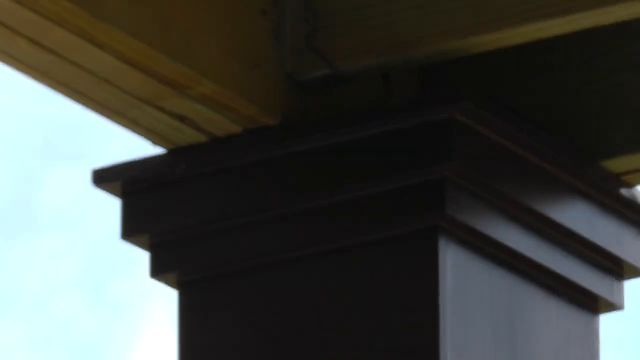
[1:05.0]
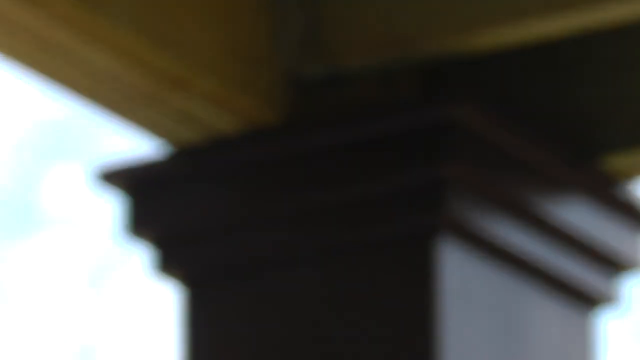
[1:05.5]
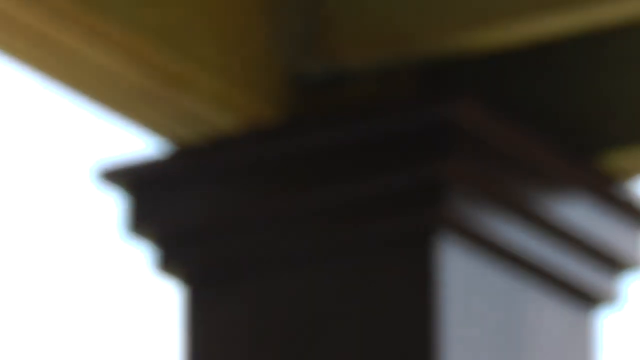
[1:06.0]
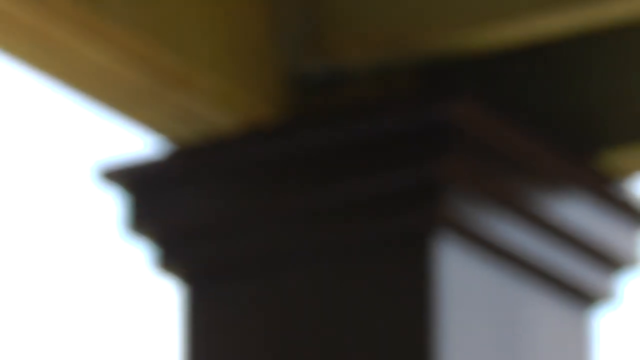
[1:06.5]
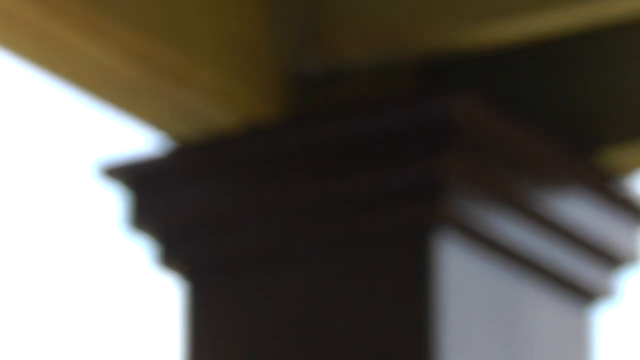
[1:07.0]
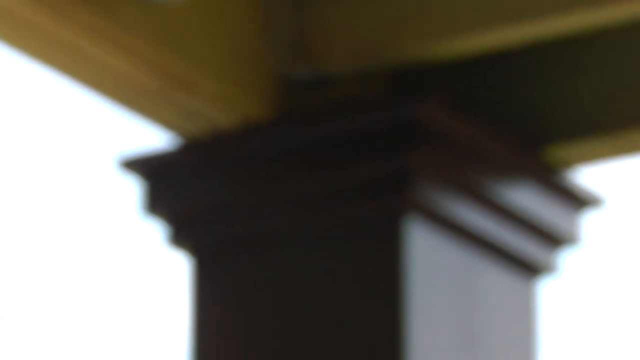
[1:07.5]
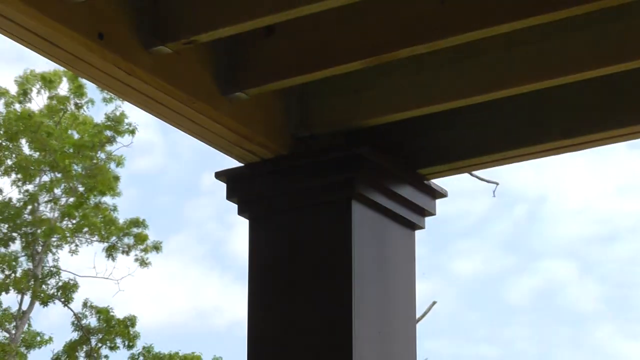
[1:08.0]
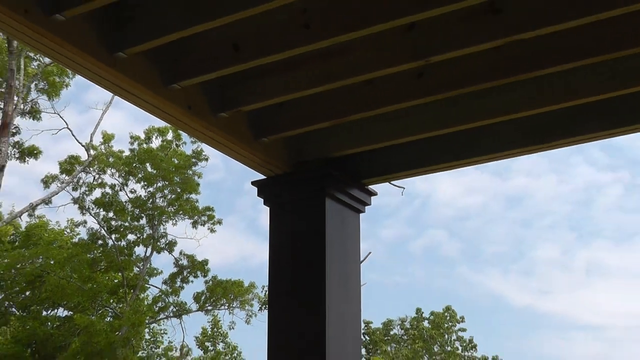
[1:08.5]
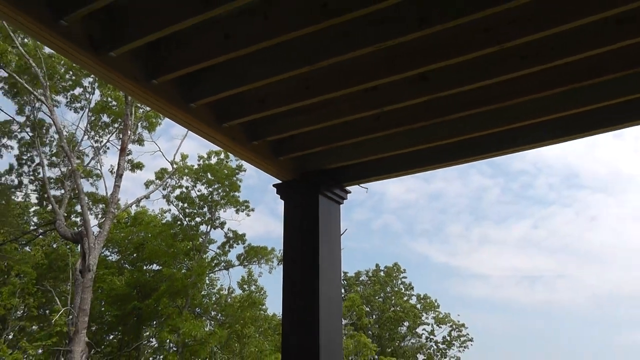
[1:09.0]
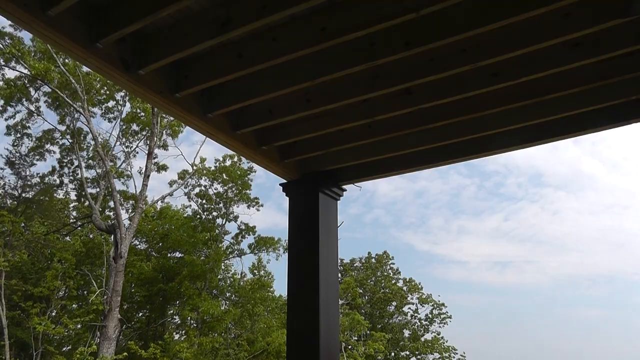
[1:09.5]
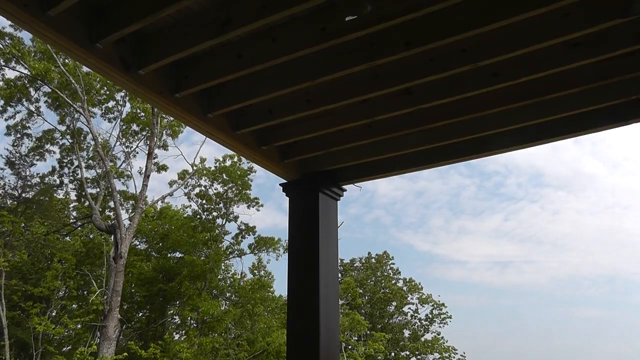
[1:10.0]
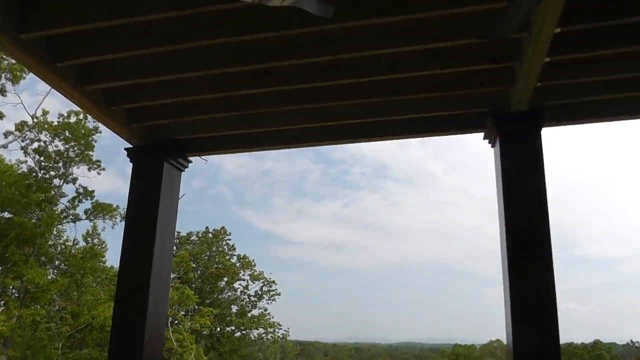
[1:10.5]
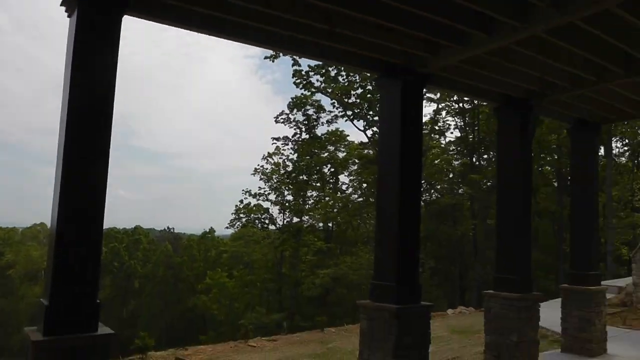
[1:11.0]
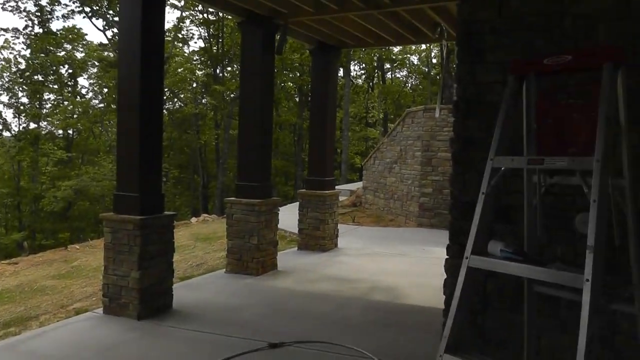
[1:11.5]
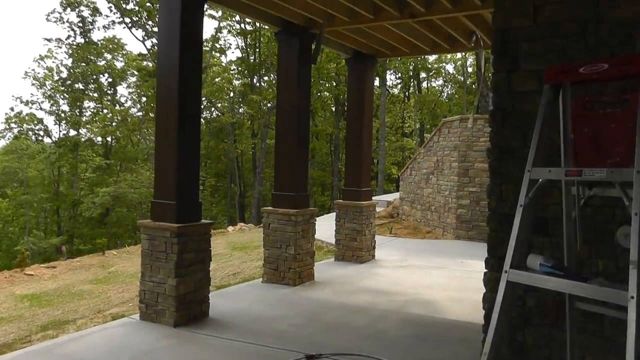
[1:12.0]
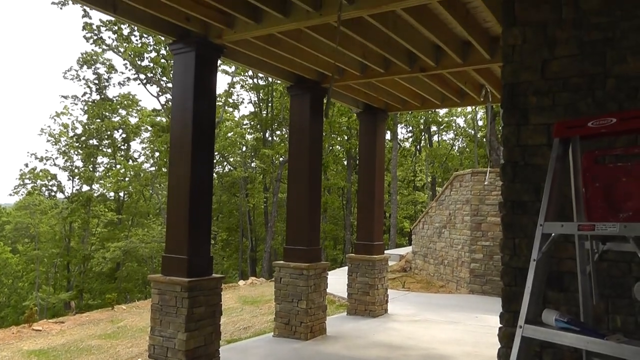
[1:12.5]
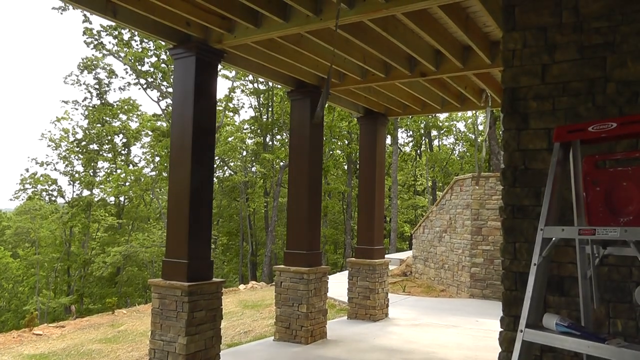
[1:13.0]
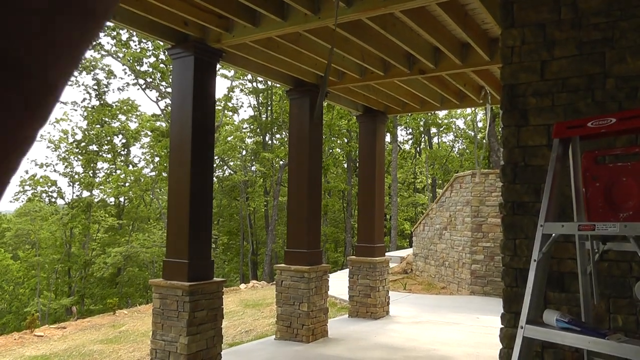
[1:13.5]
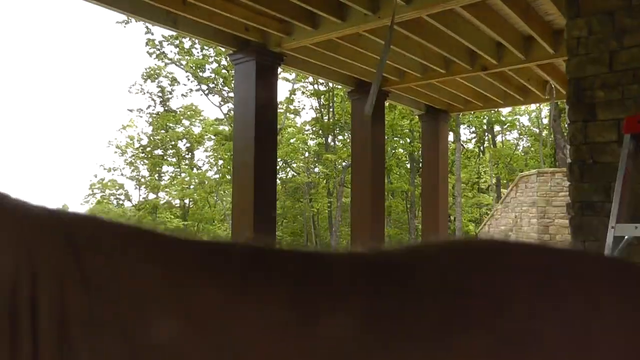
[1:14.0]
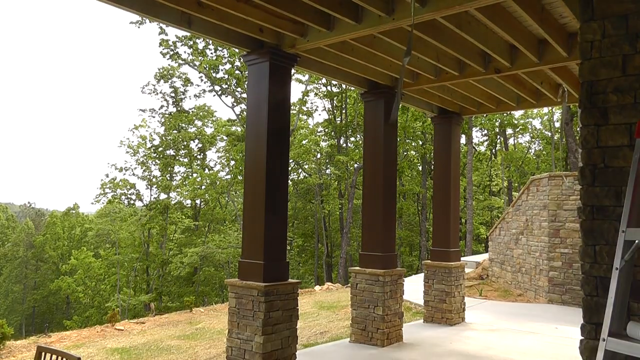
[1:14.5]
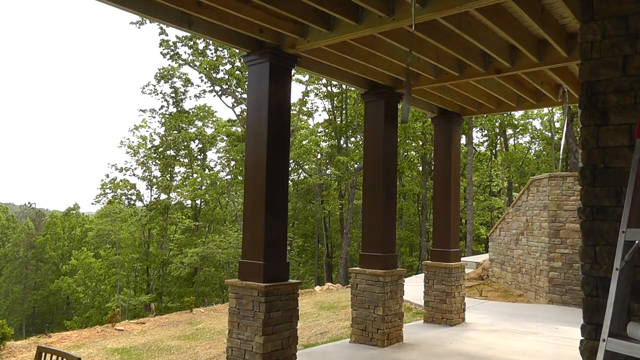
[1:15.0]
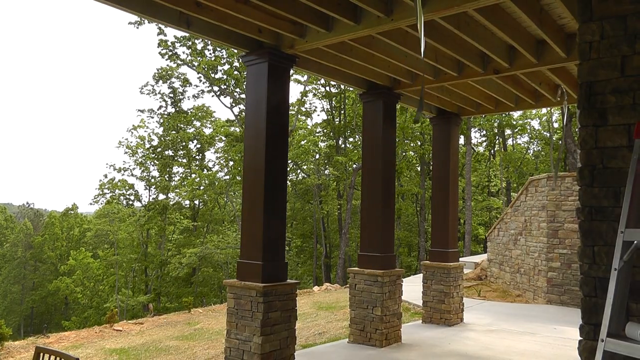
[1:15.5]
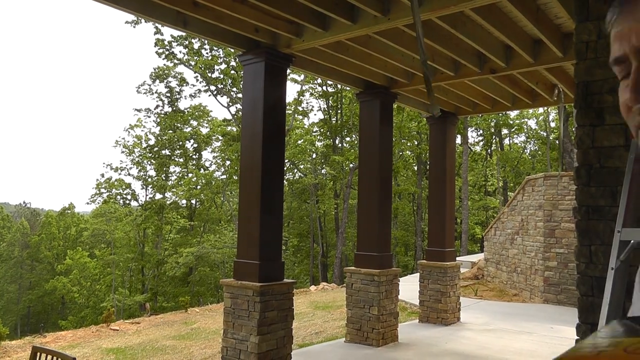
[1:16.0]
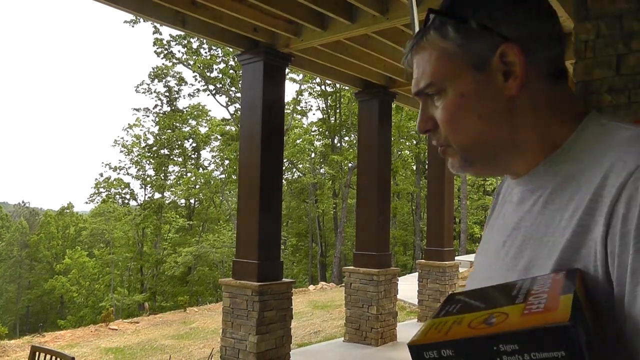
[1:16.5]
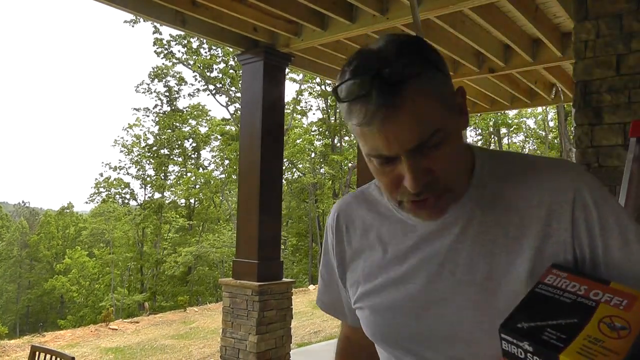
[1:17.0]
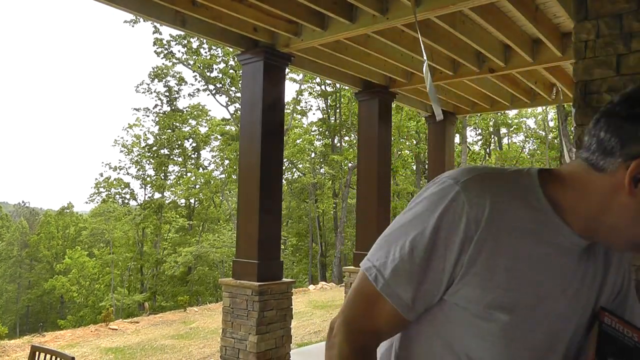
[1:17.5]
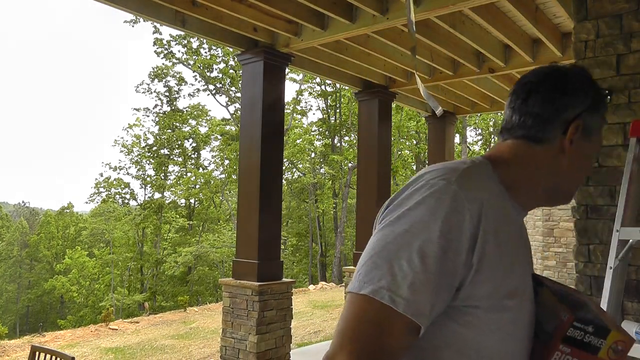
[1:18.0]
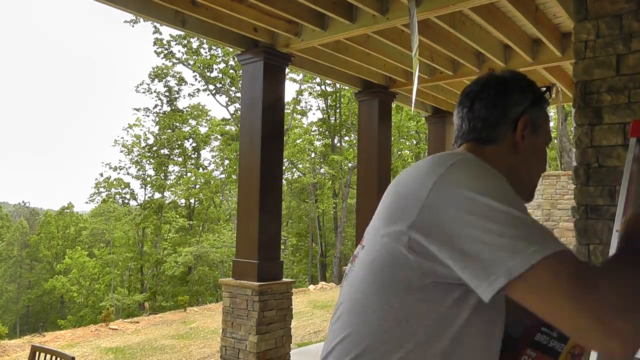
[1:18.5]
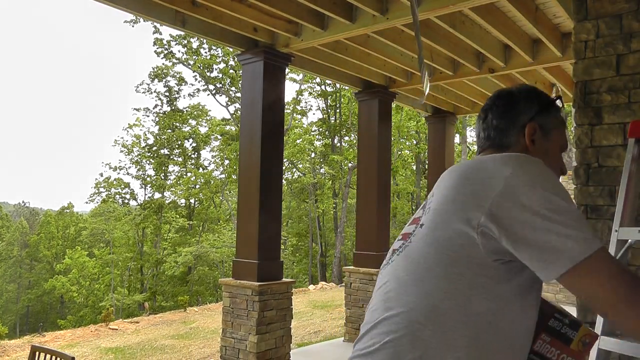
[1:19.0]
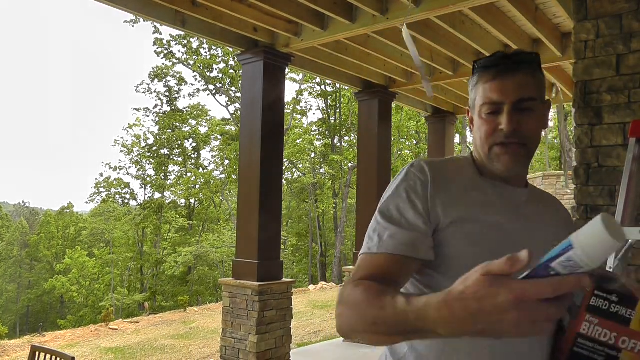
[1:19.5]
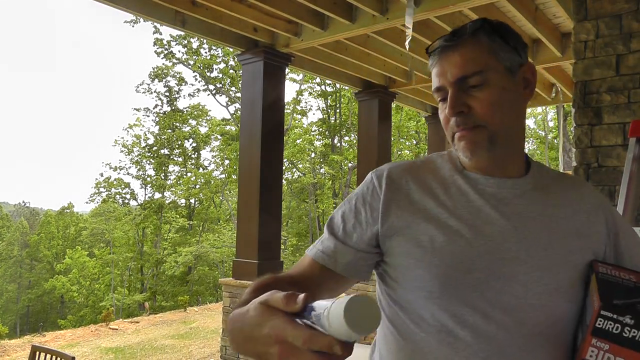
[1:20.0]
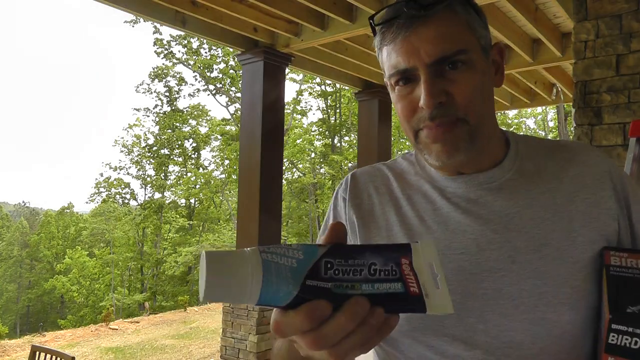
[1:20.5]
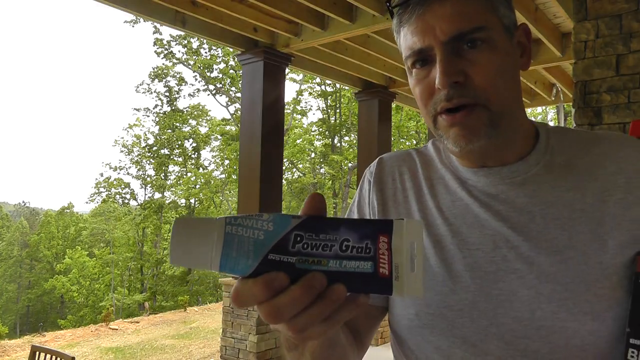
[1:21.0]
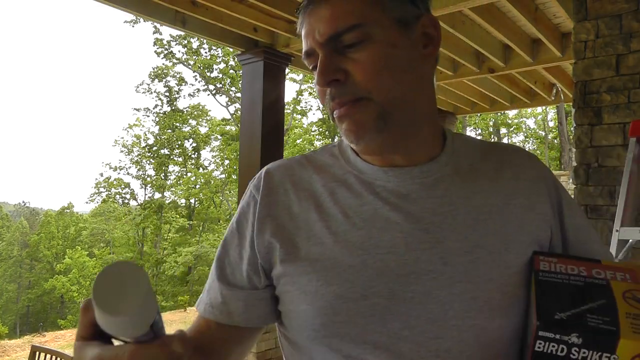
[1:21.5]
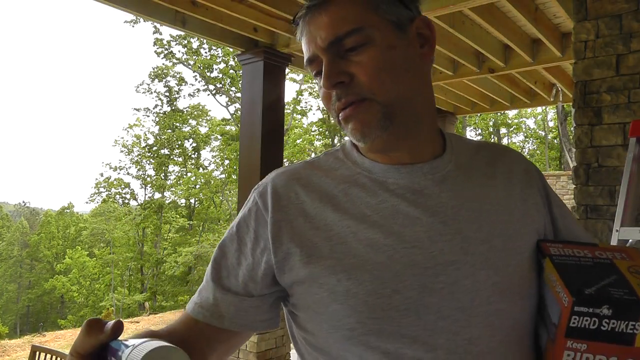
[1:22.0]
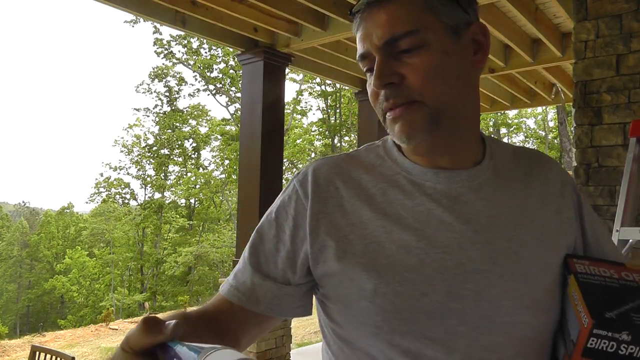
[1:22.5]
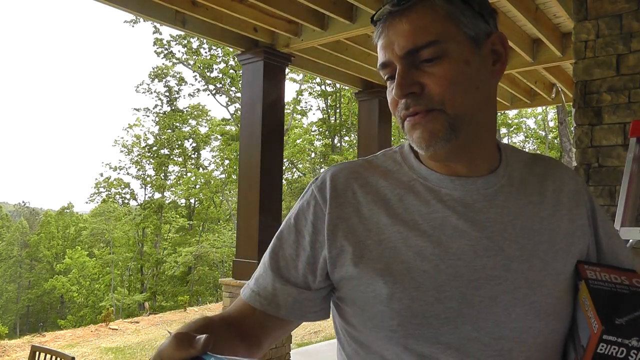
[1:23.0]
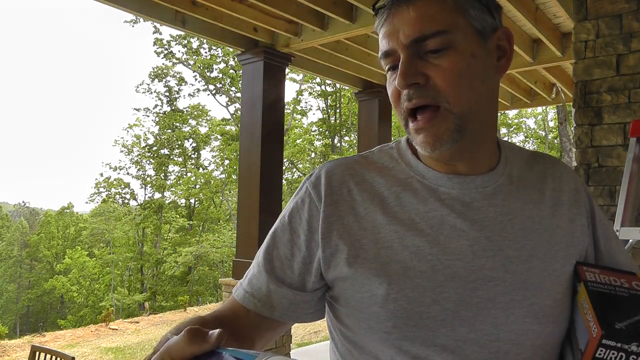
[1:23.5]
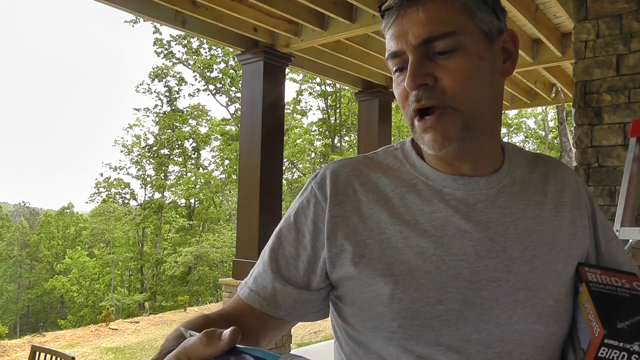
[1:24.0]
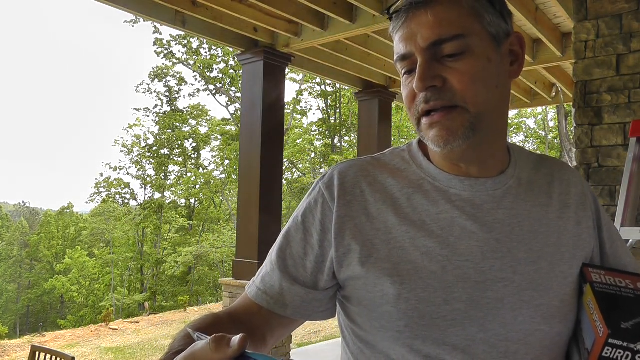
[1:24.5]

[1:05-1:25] A white man in his late 40s appears in this part of the video. The camera is zoomed into a corner of a porch, then zooms out, and the man repositions the camera. He gets back in front of the camera and picks up a white tube of a product with a white cap and a blue body with light blue accents, labeled "Power Grab". He appears to read something off the tube and describe the product in his hand. An aluminum ladder is behind him, with trees in the background.